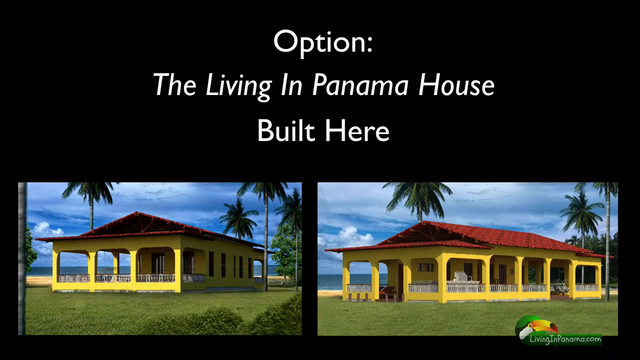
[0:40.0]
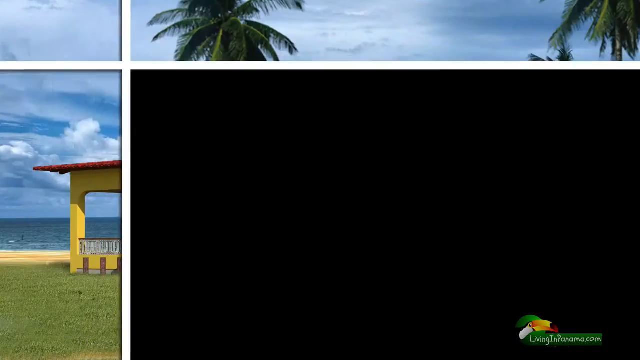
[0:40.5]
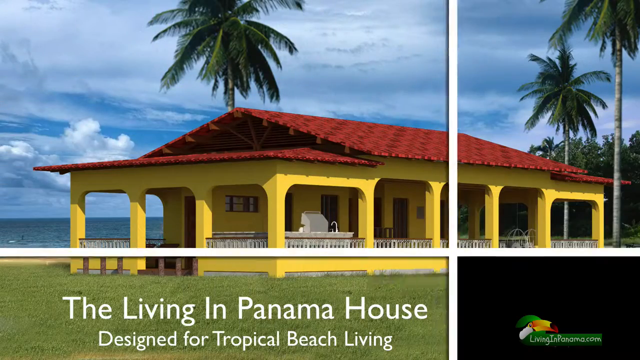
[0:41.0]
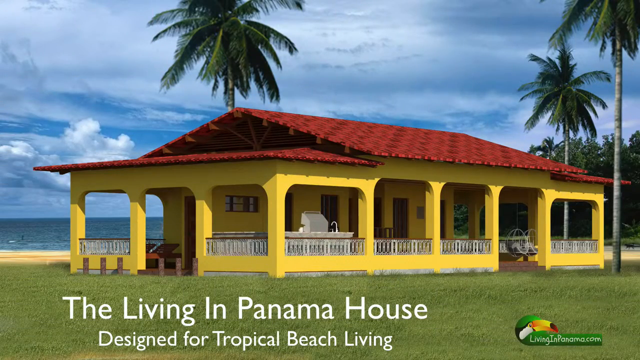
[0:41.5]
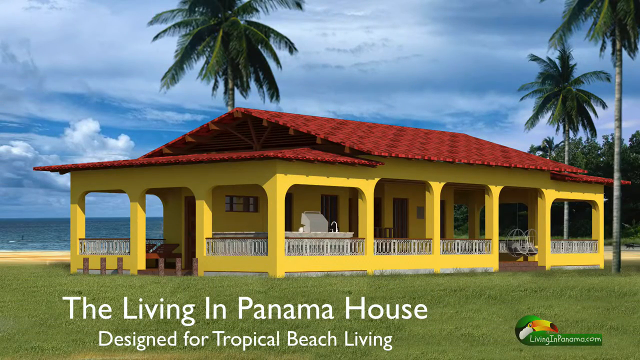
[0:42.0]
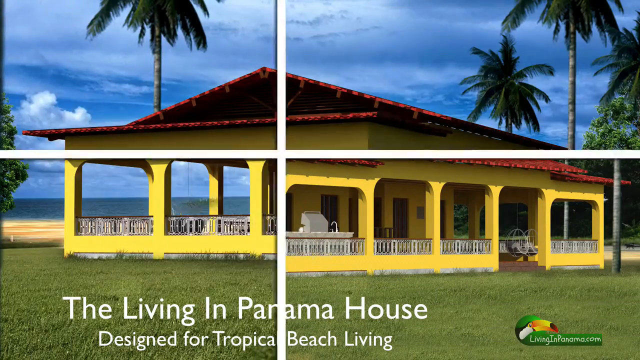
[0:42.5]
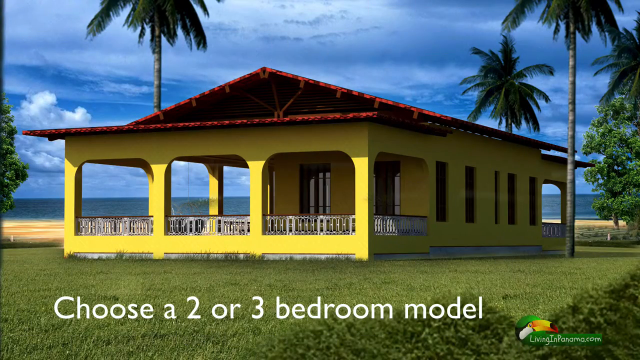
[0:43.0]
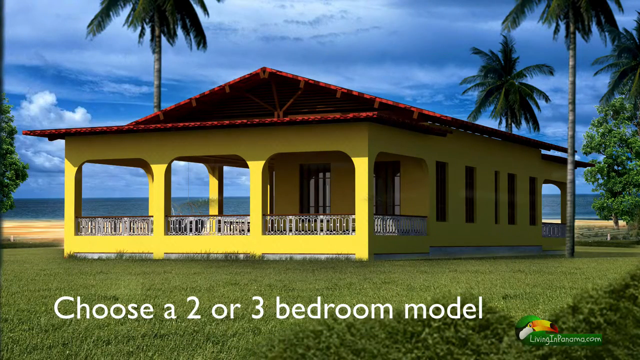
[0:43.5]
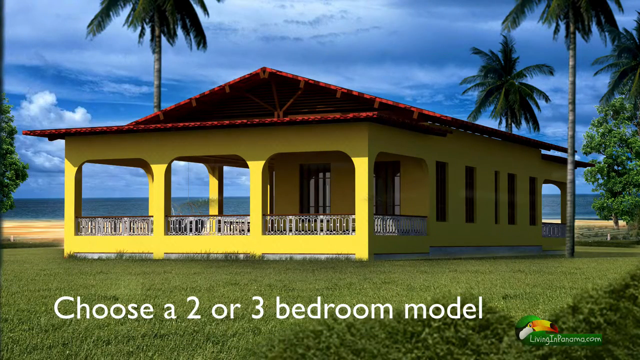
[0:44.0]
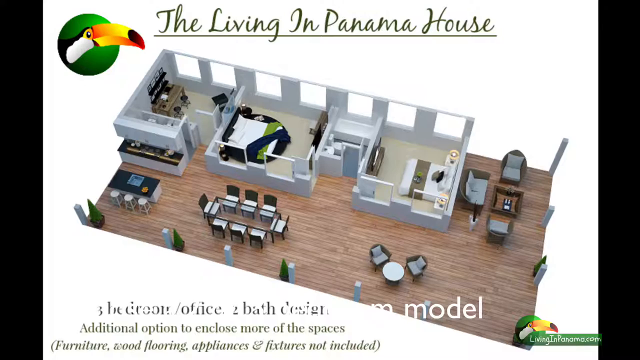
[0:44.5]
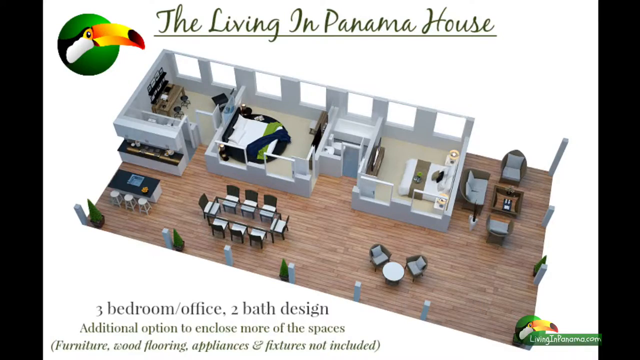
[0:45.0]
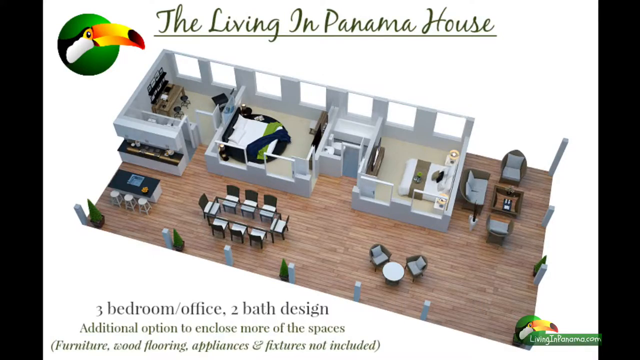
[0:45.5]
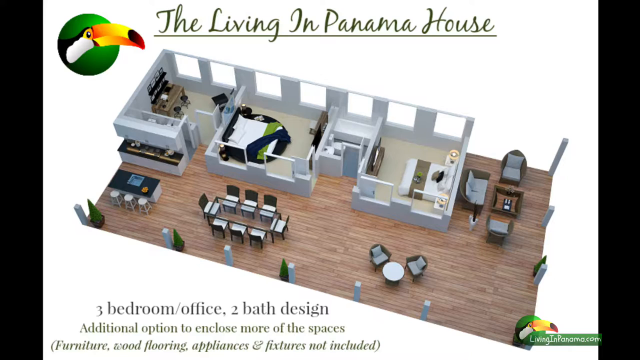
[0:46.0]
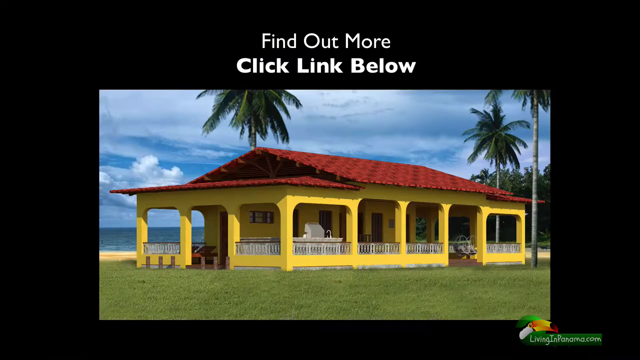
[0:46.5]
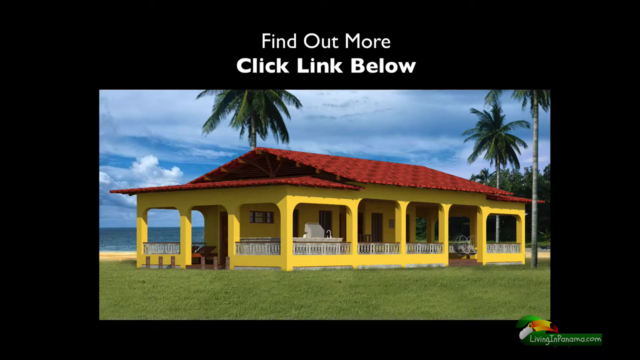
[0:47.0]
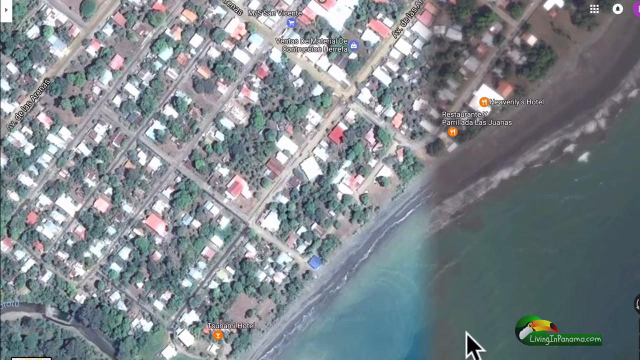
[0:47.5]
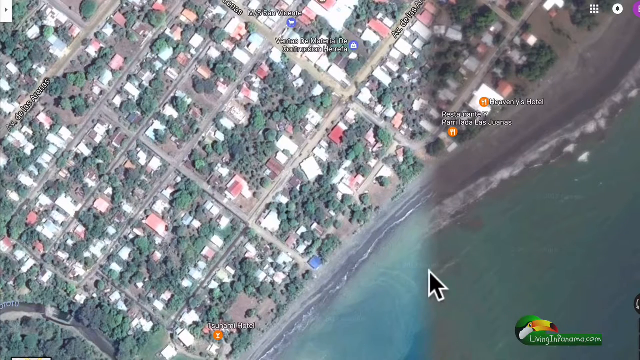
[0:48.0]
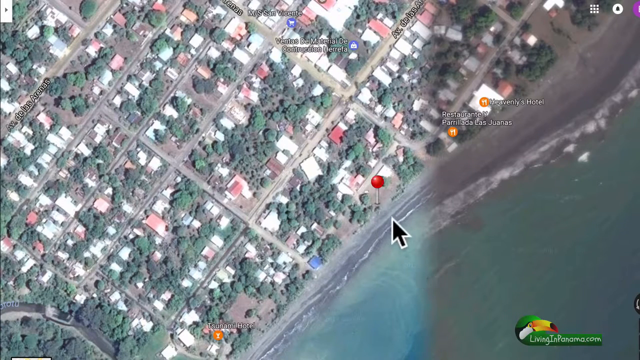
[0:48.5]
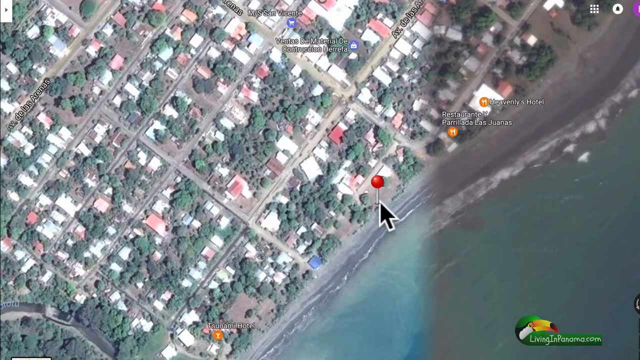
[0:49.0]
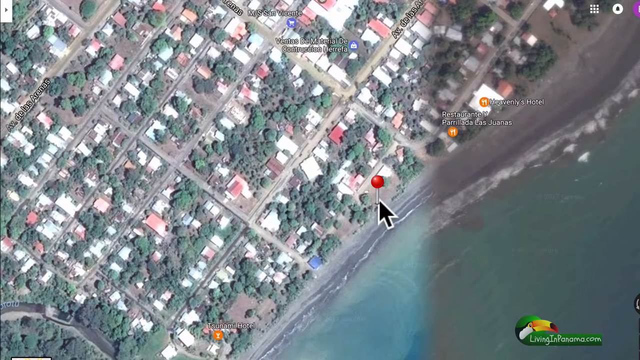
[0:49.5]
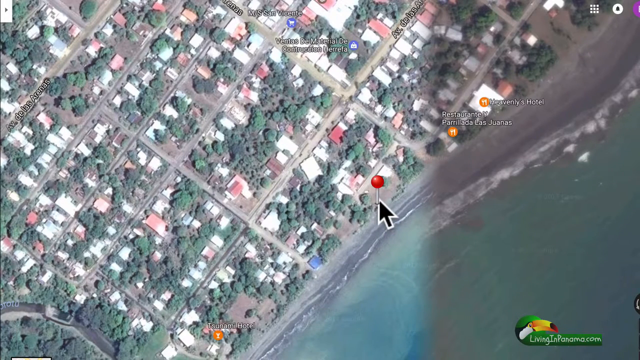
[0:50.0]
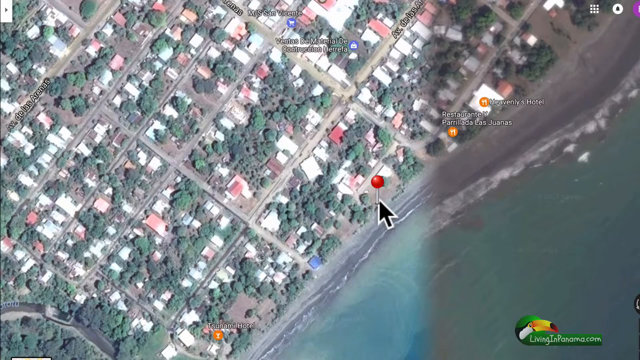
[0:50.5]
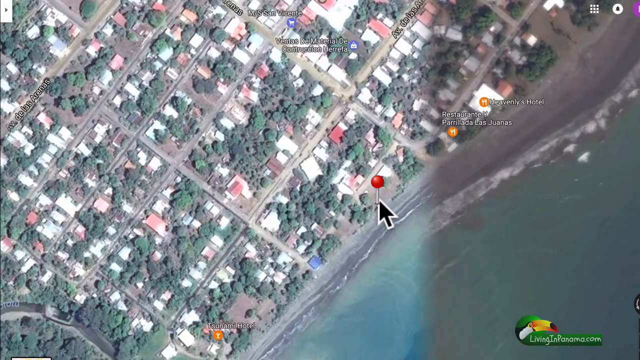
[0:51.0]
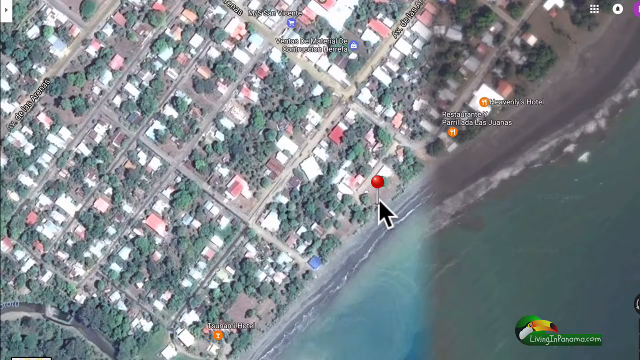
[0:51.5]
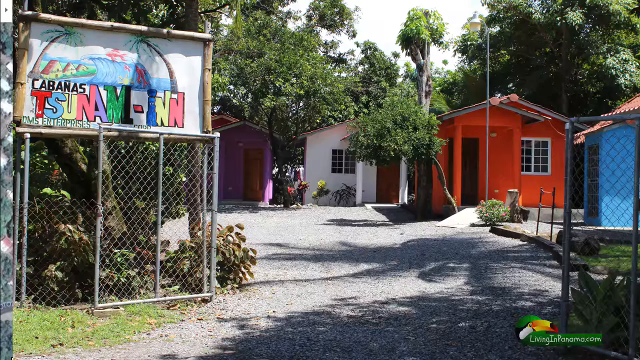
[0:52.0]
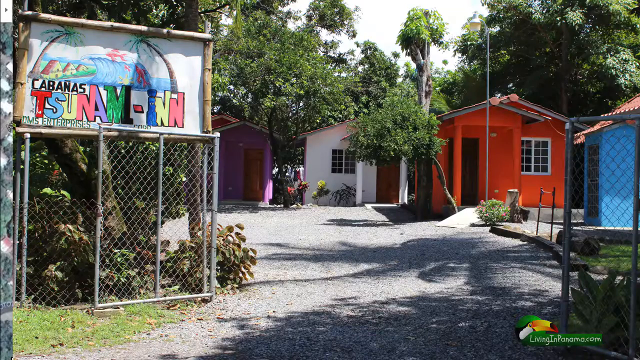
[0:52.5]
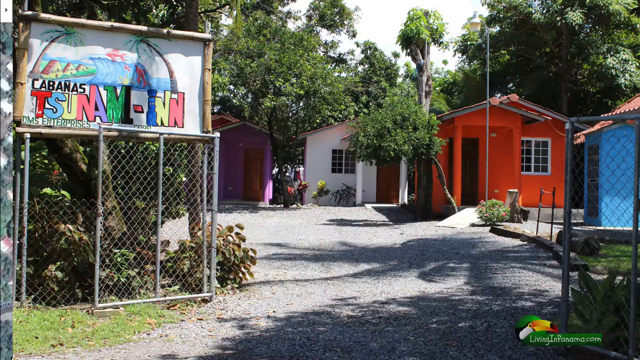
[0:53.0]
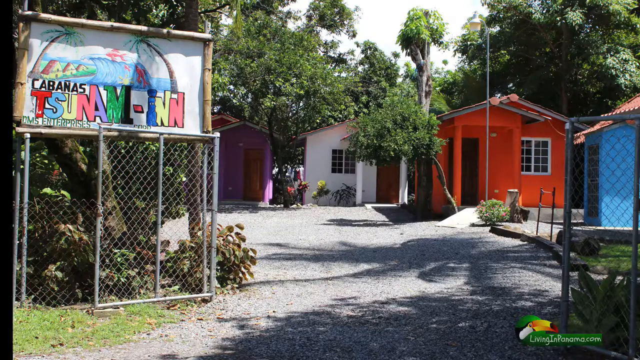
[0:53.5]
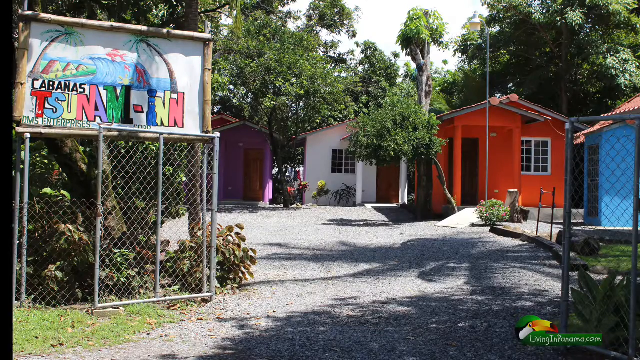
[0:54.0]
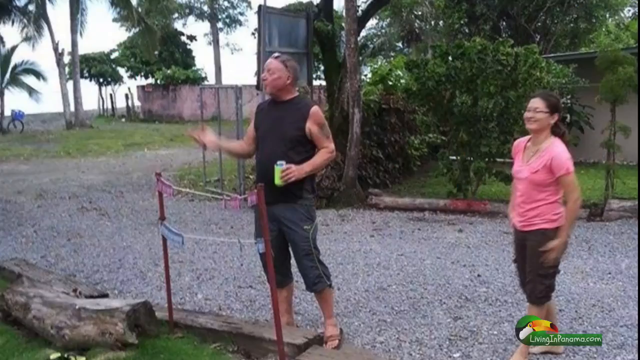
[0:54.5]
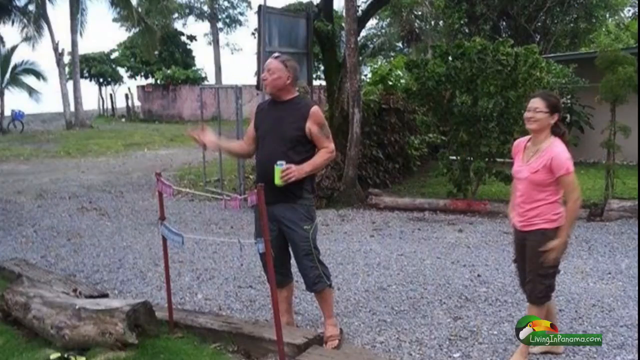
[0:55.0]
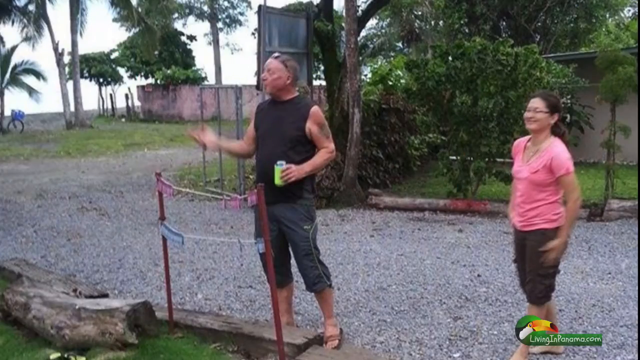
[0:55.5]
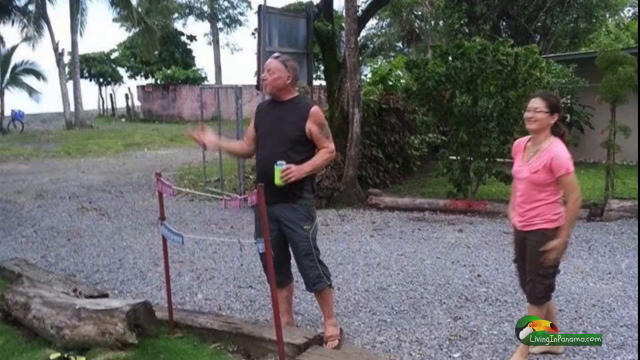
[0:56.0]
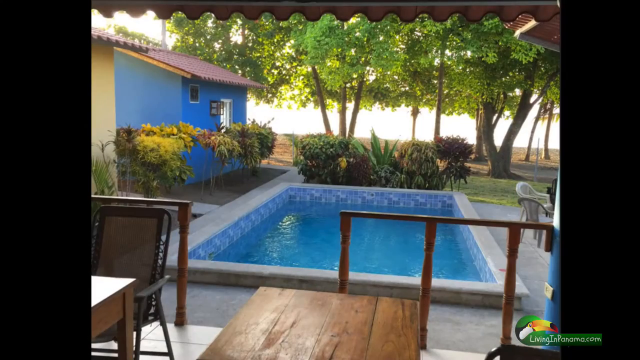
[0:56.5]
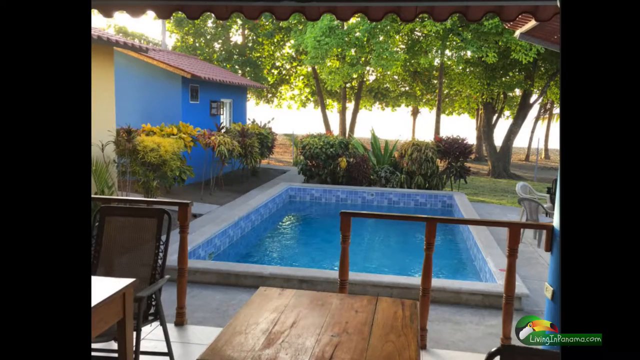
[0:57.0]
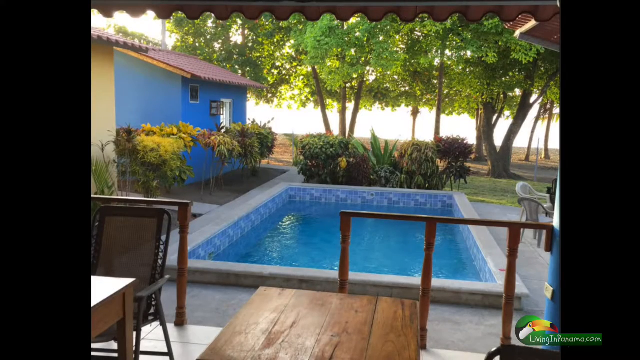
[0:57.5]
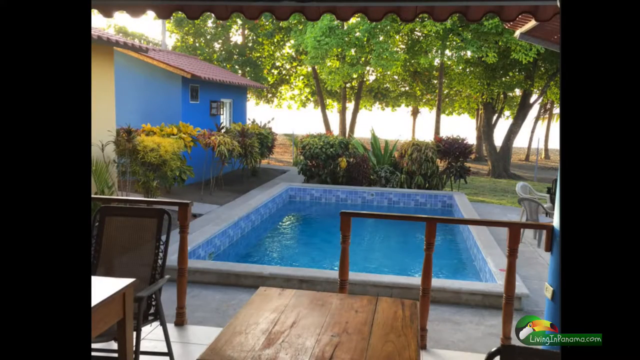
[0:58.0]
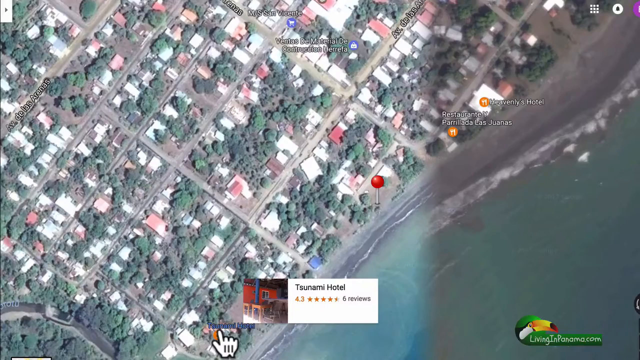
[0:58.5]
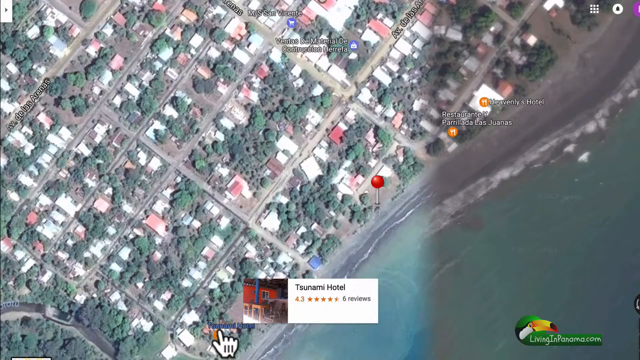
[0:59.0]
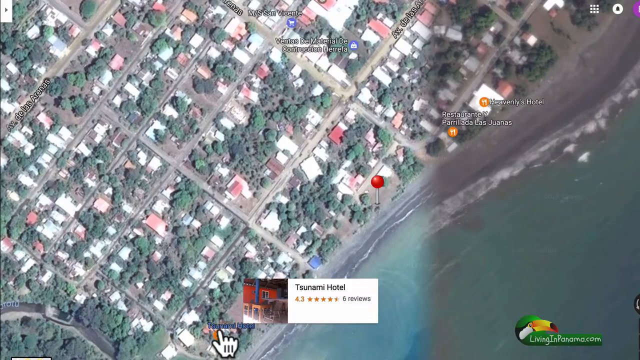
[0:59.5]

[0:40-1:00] Two pictures of houses appear, apparently the same house from two different angles, front on and side on. It is a yellow house with lots of porch area and a red roof, with palm trees in the background, a clear blue sky with cloud, and green grass at the front. Above the pictures it says "option the living in Panama house built here". The view gets much closer to the yellow house and says "the living in Panama house", showing the yellow rendering and a large porch area. It cuts to another picture of the yellow house that says "choose from a two or three bedroom model", then to an animated interior overview of the house with the roof and sides missing, showing a wooden floor, two bedroom areas, a bathroom, and in the main room a kitchen area with seating and dining room tables. It returns to the picture of the yellow house, which says "click here to find out more", then cuts to a Google Maps image with a red pin and a black arrow pointing towards where the house is. Next come an image of some hut houses, two people standing in a street, and a picture of a small swimming pool area, before going back to the Google Maps image.